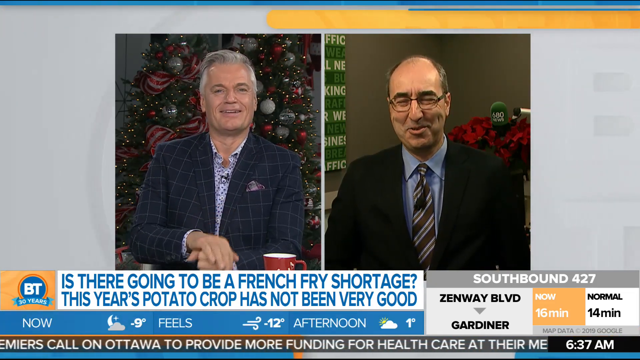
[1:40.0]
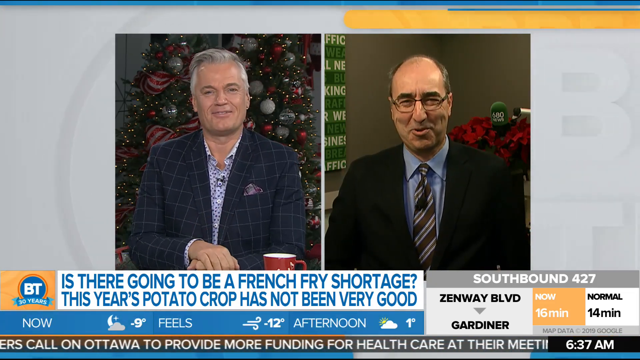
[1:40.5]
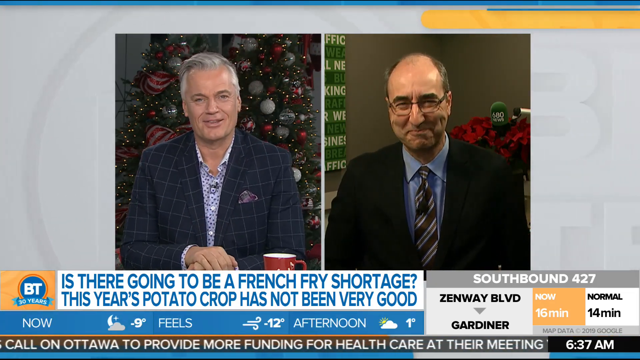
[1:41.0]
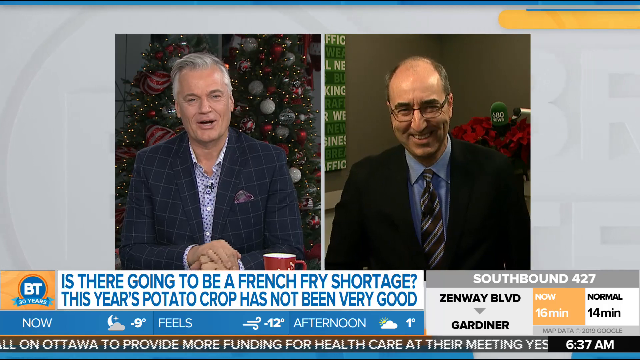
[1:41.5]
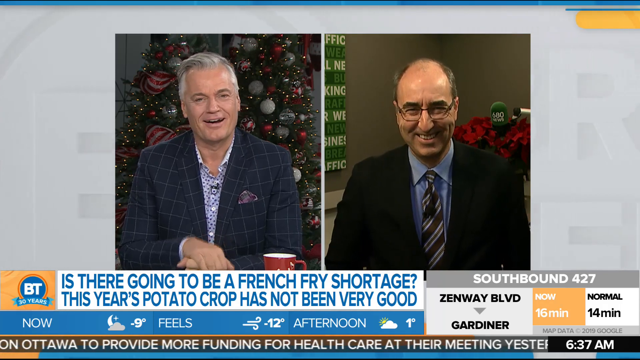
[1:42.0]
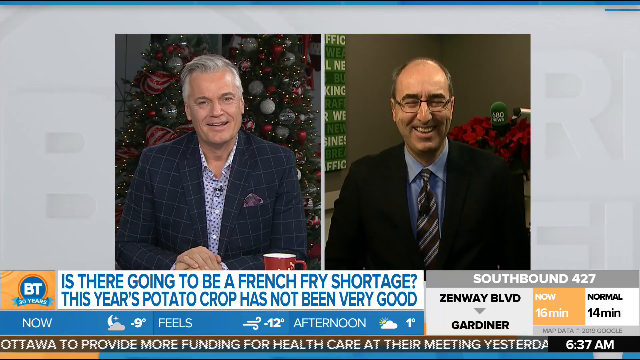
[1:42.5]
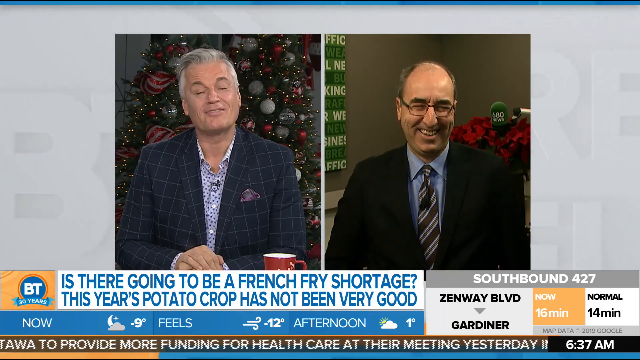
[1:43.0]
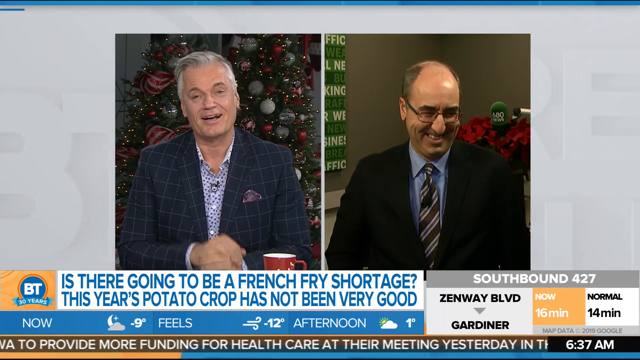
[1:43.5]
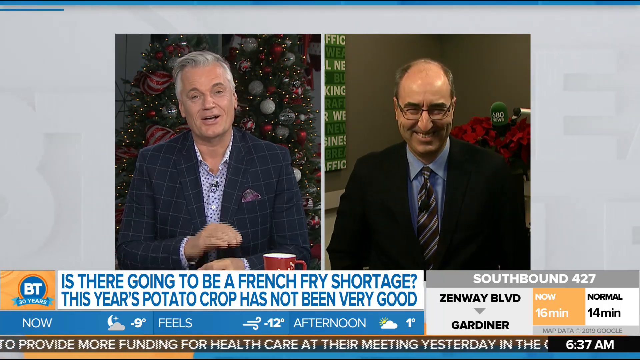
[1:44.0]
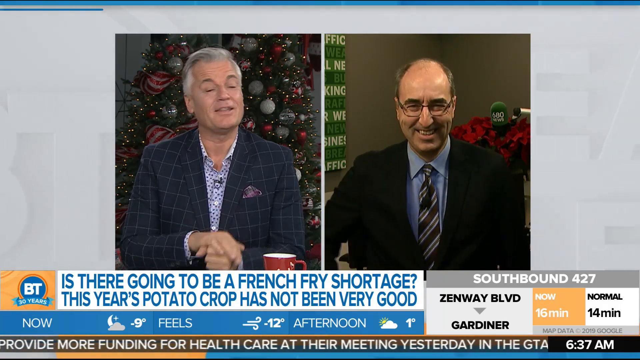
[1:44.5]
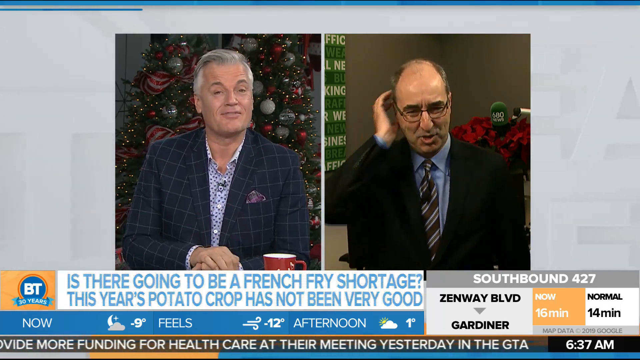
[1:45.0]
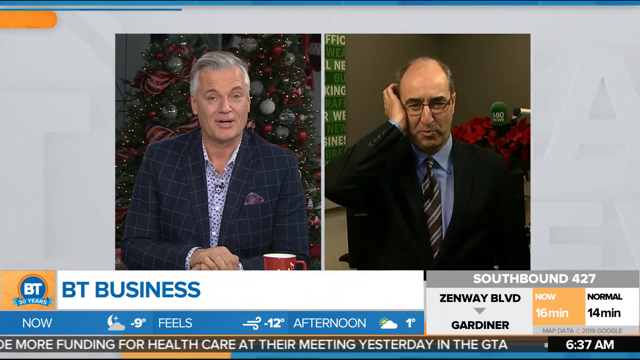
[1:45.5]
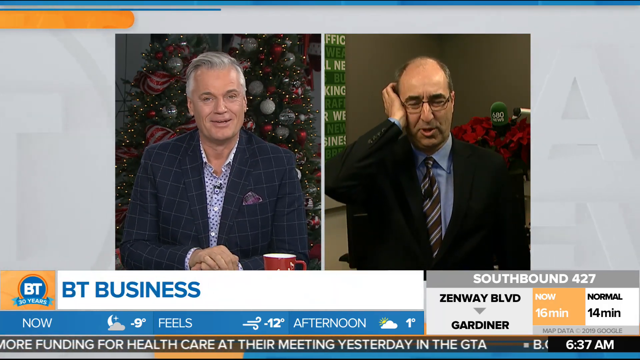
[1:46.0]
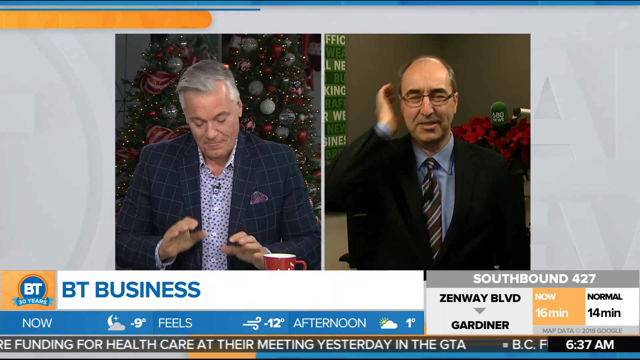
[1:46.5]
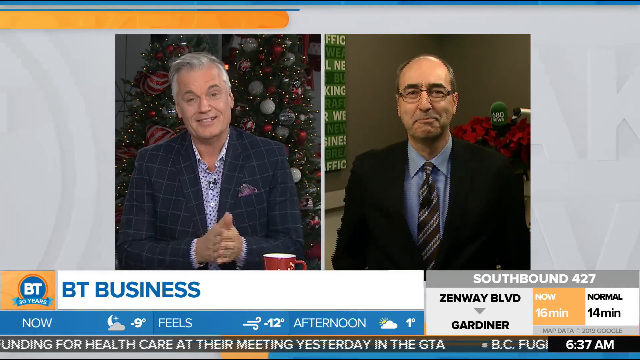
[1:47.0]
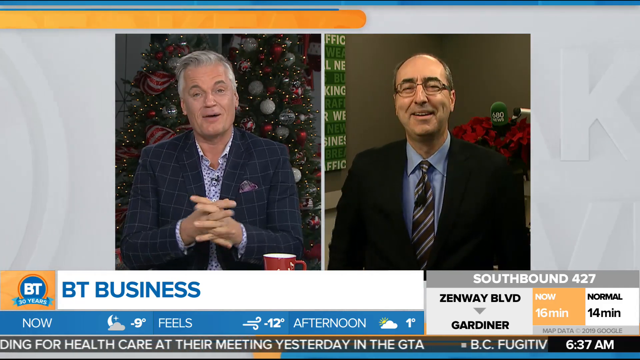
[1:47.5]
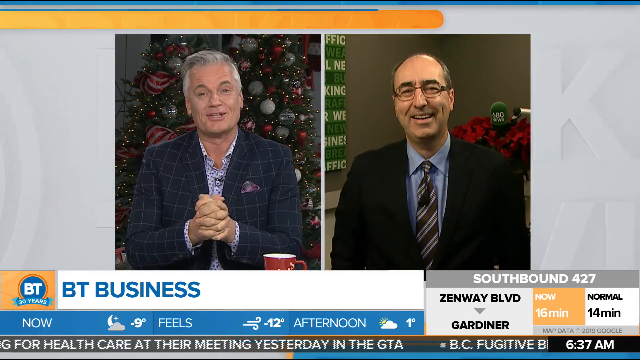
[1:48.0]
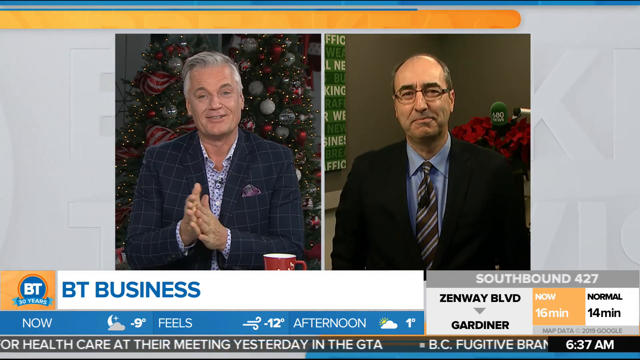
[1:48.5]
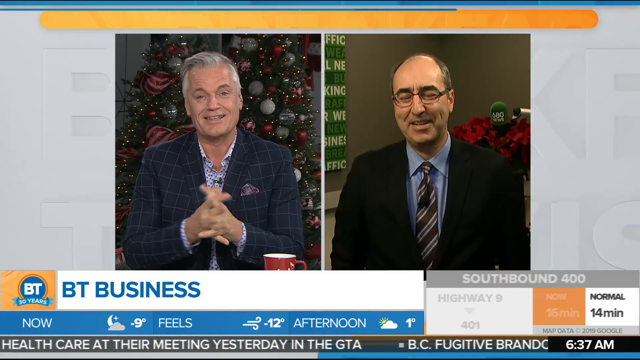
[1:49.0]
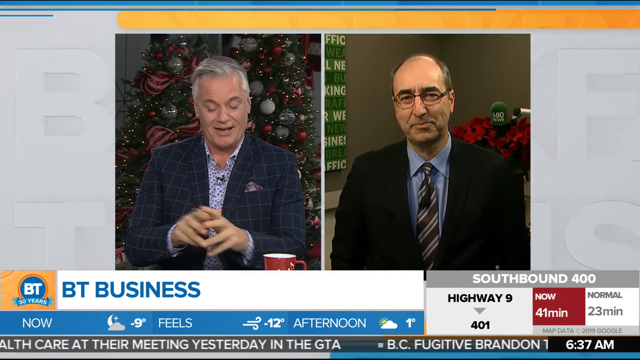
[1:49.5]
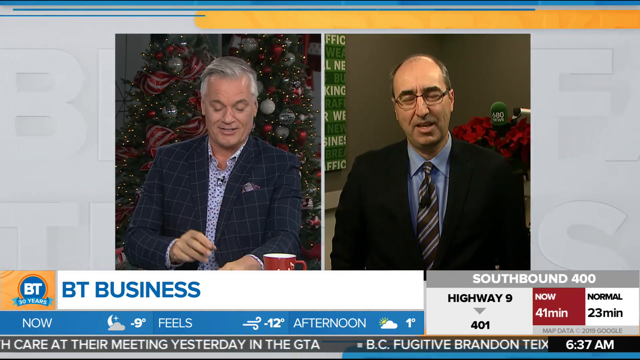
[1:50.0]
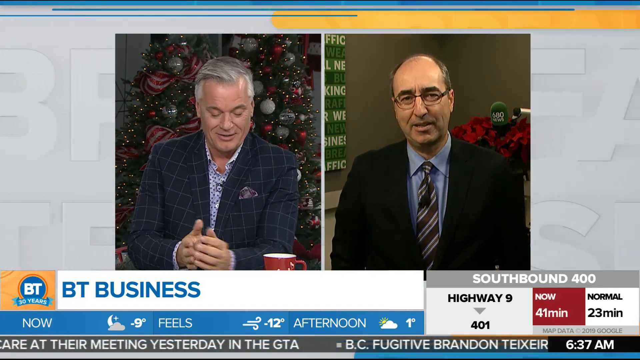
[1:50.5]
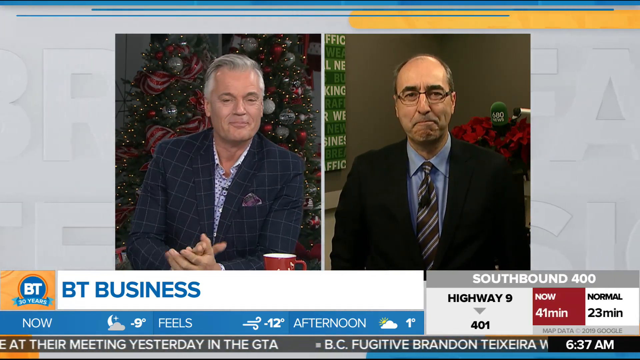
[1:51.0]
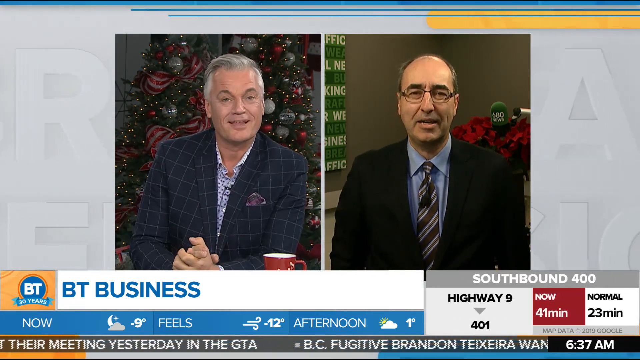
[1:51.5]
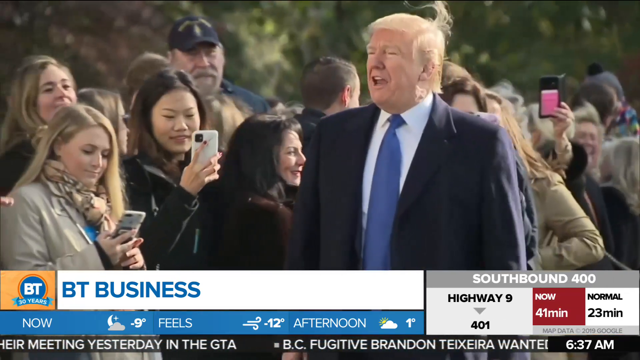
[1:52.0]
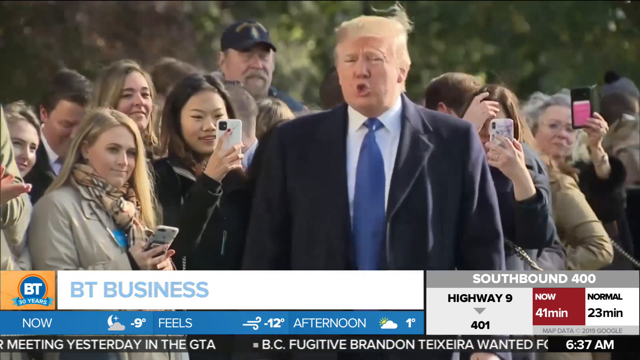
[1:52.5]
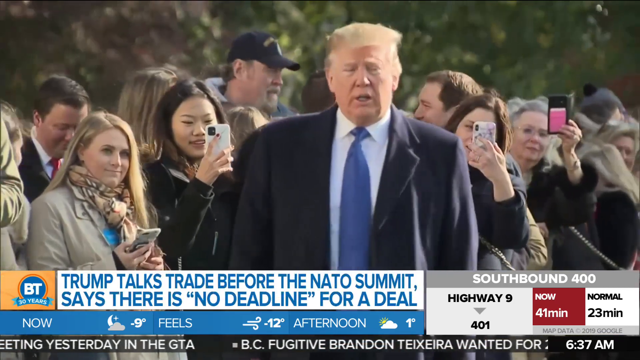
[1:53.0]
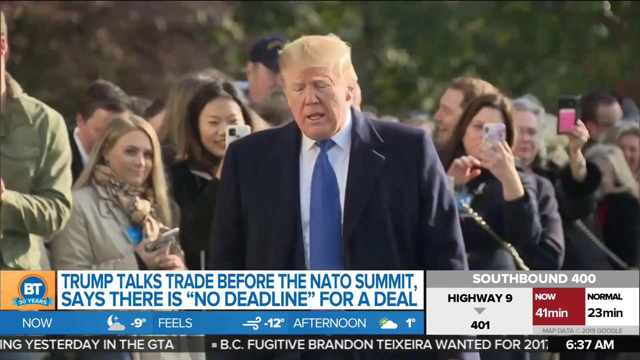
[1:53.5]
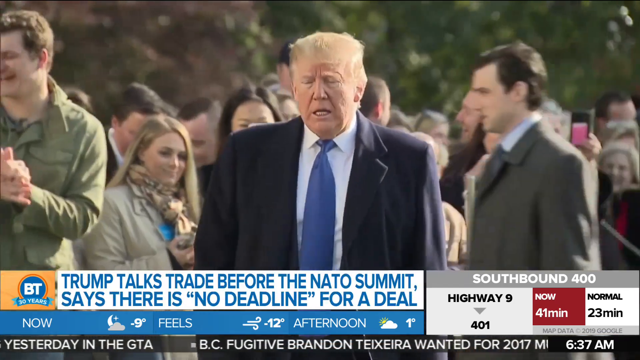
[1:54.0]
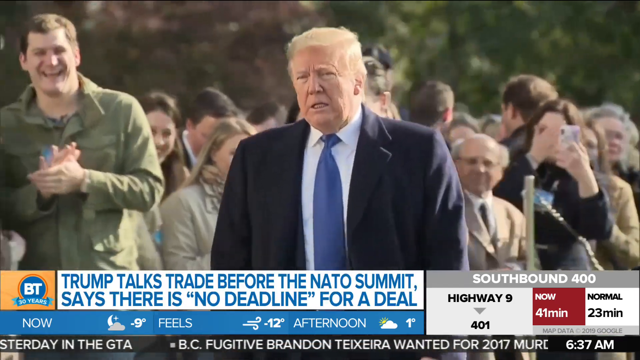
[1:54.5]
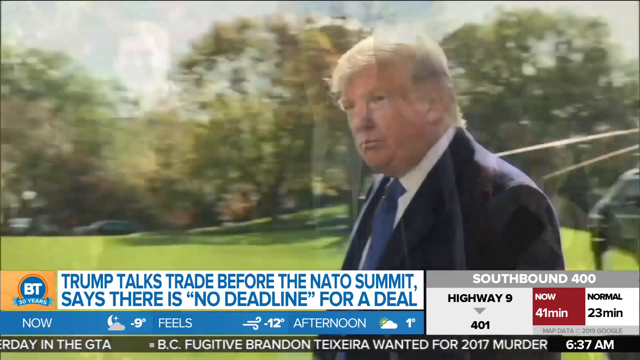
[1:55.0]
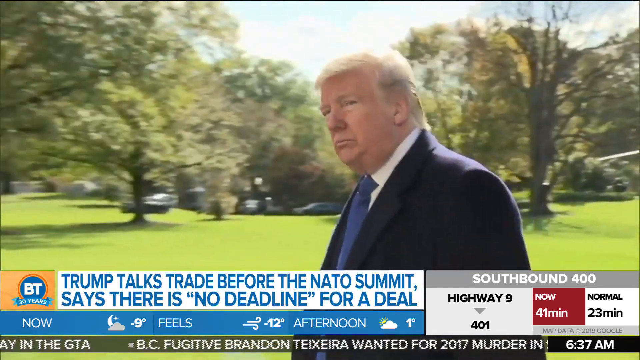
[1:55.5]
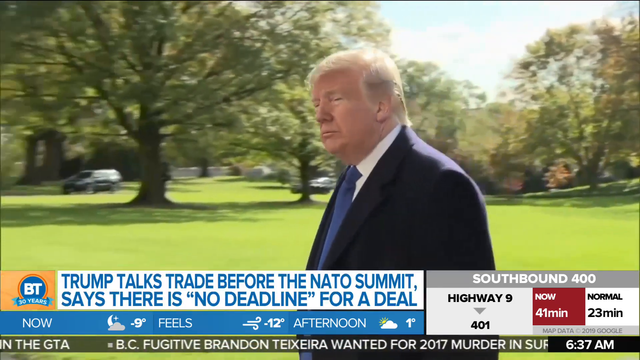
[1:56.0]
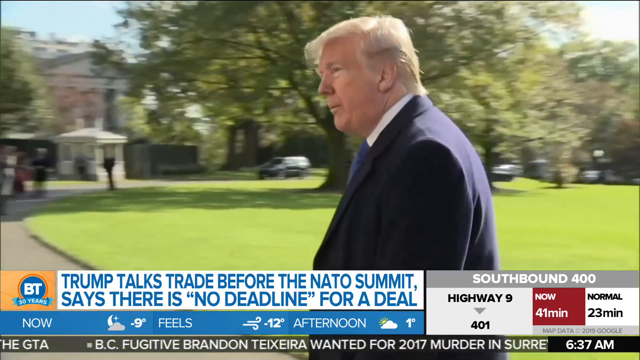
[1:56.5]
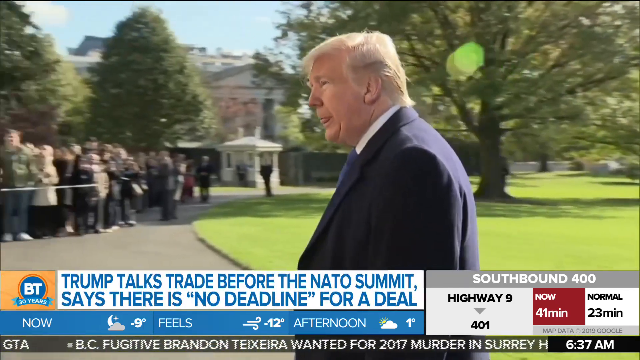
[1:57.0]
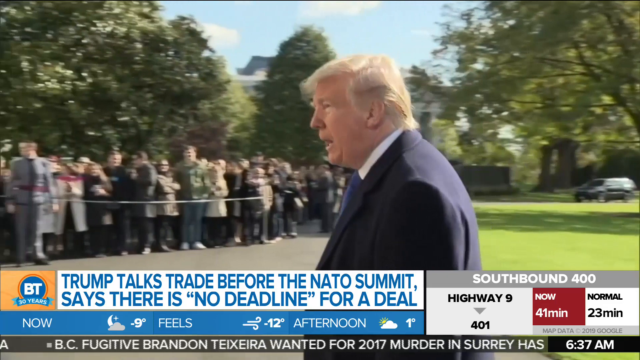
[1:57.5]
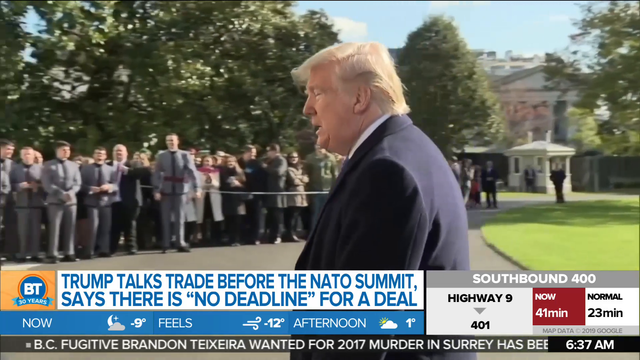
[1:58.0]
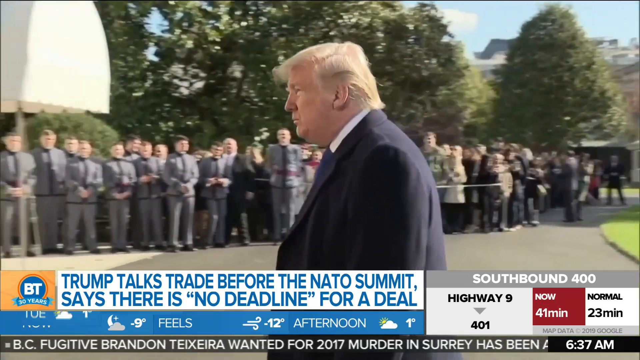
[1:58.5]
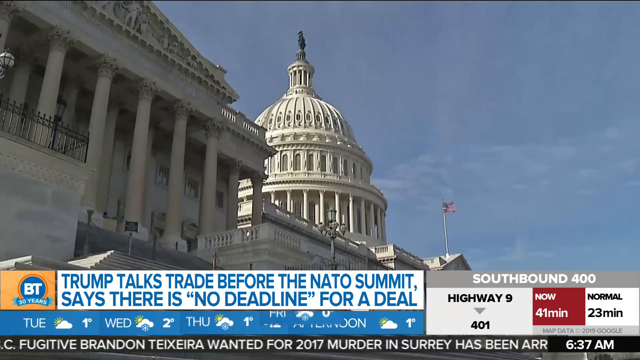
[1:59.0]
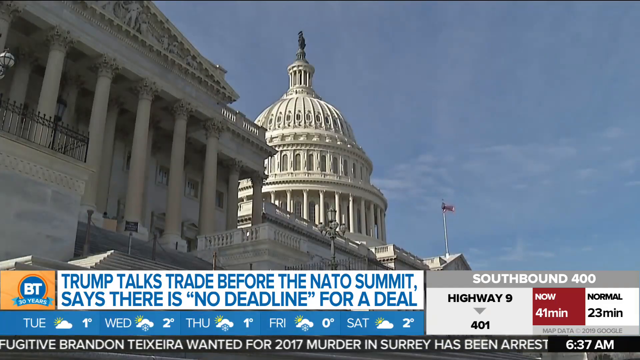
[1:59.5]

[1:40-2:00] A segment from the BT news organization shows its emblem in the bottom left: white text "BT" in a blue circle with a red outline, and a blue banner reading "30 years" at the bottom of the circle, in a golden square. To the right, a white rectangle reads "Is there going to be a french fry shortage? This year's potato crop has not been very good." A weather forecast is at the bottom of the screen in blue, and on the right side a gray and white box shows a traffic update for southbound 427. Above, a large split screen shows two newscasters. The newscaster on the left sits in front of a Christmas tree, wearing a black suit with white stripes and a white shirt with black polka dots, and has gray hair combed to the right side. He starts with his right hand resting on his left hand. The man on the right is balding and wears black glasses, a black suit jacket, a blue shirt, and a striped black and white tie. As they talk, the man on the left holds his left hand in a fist and taps his right hand on top of it, puts both hands down on the table, slightly hits the desk, rests his hands, and then taps the desk with his left hand. He brings his hands together to rub them, clasps his fingers together in front of his body, looks down, and looks like he moves a piece of paper with his left hand. He slightly rubs his hands together, clasps them, and sets them down on the desk. The video then shows President Trump in a blue tie, white shirt, and black jacket, walking in front of a crowd, some of whom have cameras out. Trump stands on a green lawn, walks across it, and then onto a paved area, where a group of people is behind a corded-off area, and what appear to be soldiers in gray uniforms are in the background.